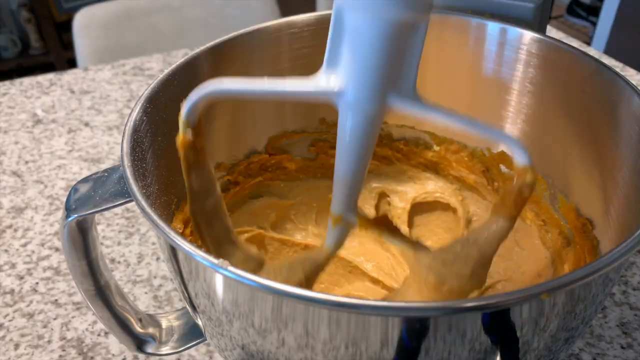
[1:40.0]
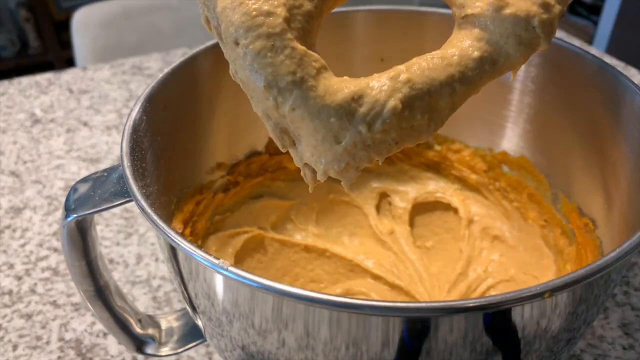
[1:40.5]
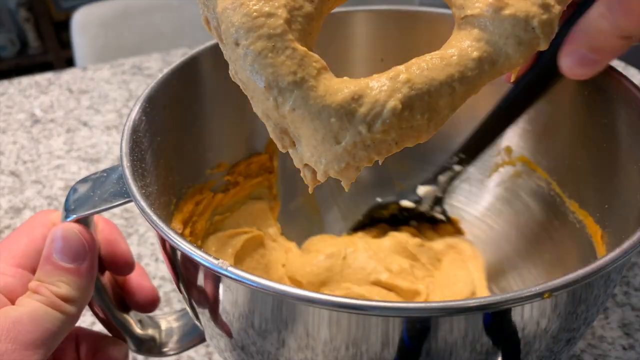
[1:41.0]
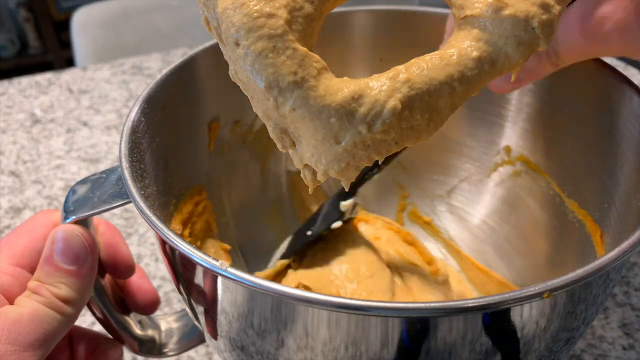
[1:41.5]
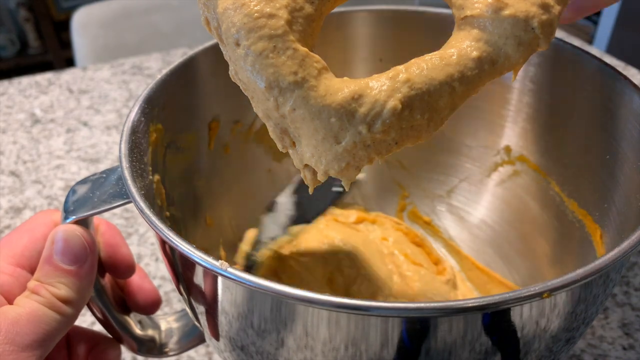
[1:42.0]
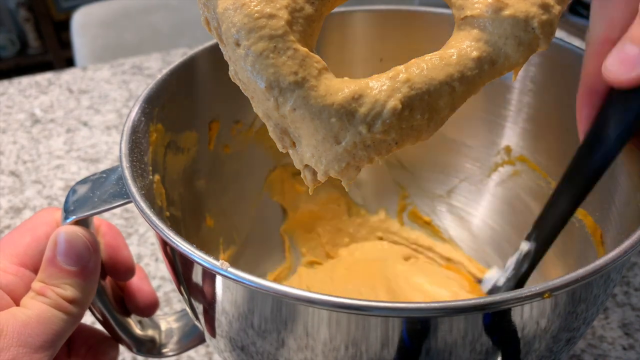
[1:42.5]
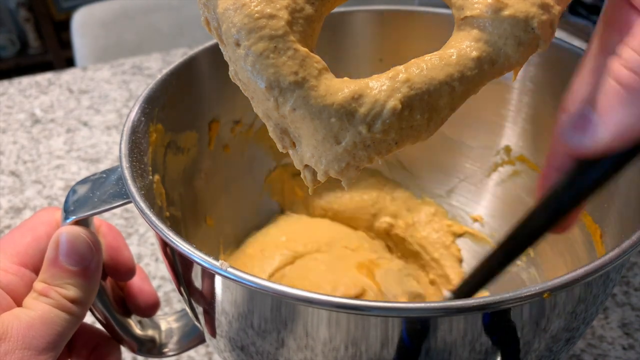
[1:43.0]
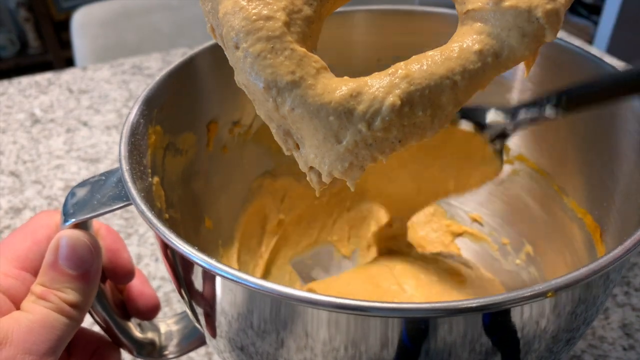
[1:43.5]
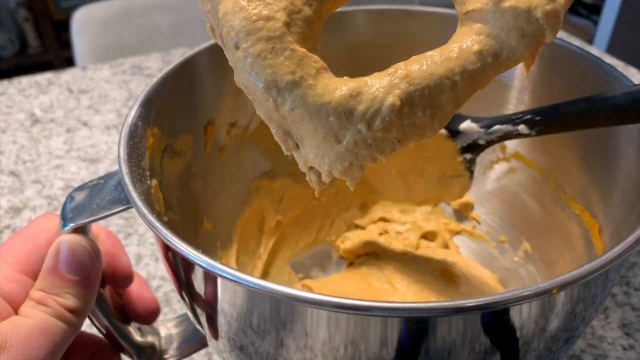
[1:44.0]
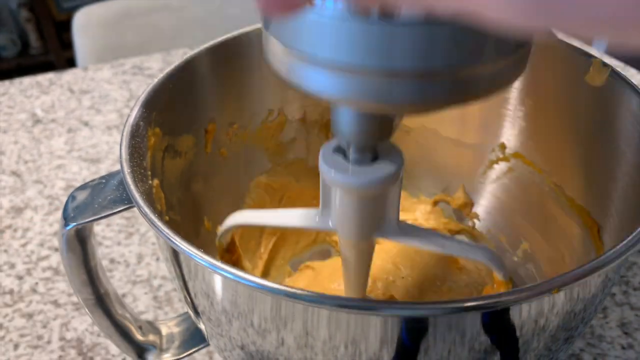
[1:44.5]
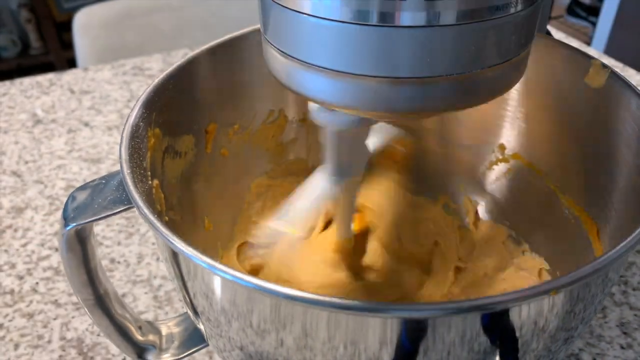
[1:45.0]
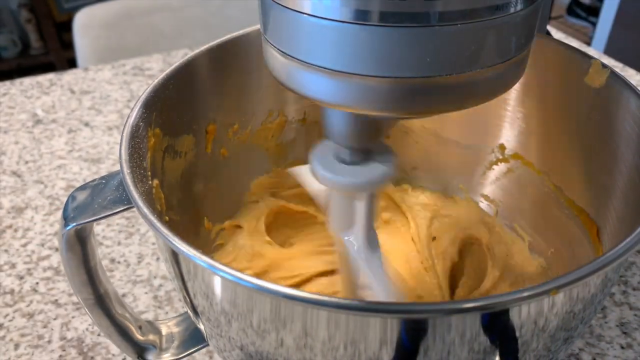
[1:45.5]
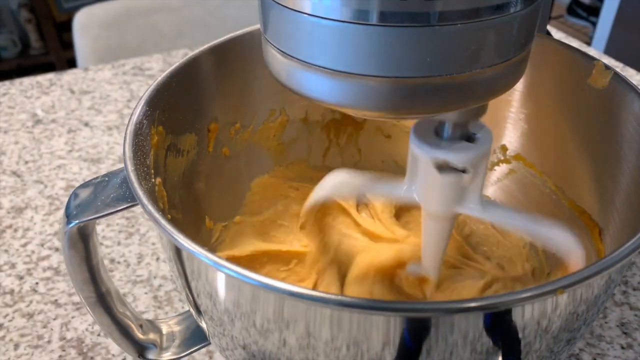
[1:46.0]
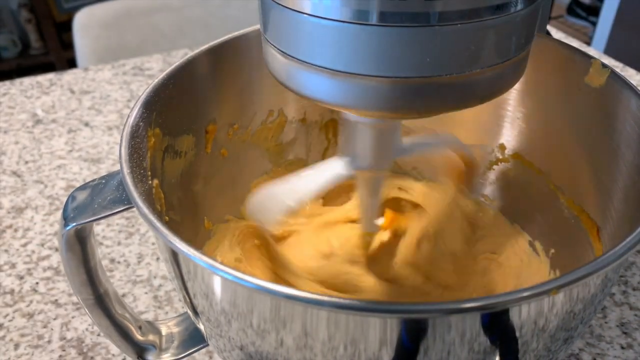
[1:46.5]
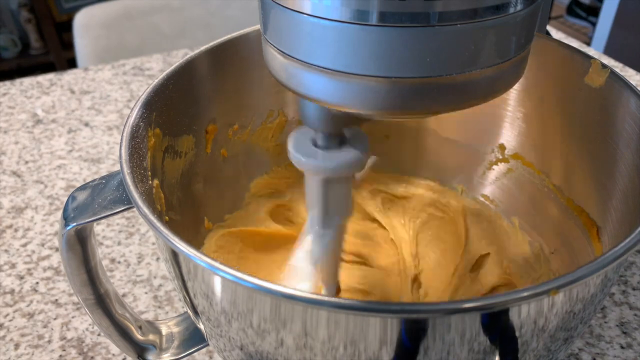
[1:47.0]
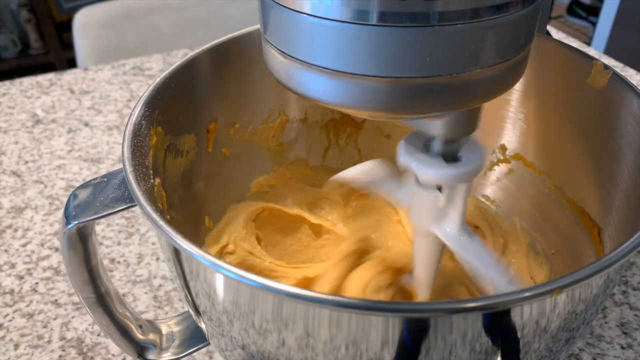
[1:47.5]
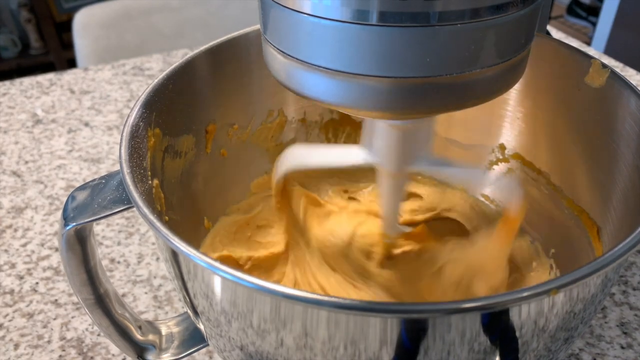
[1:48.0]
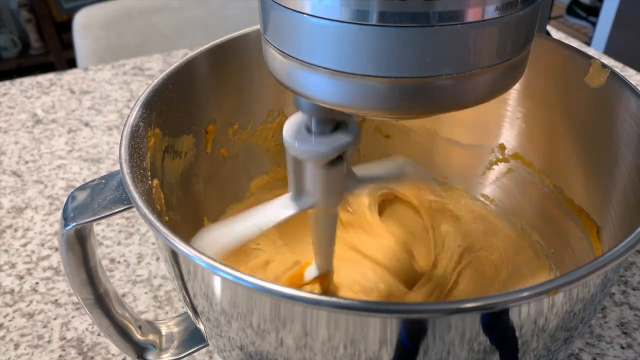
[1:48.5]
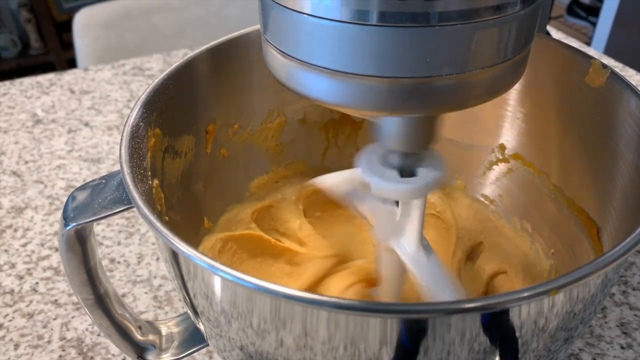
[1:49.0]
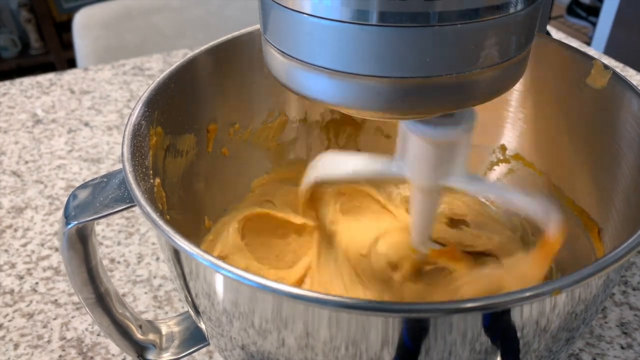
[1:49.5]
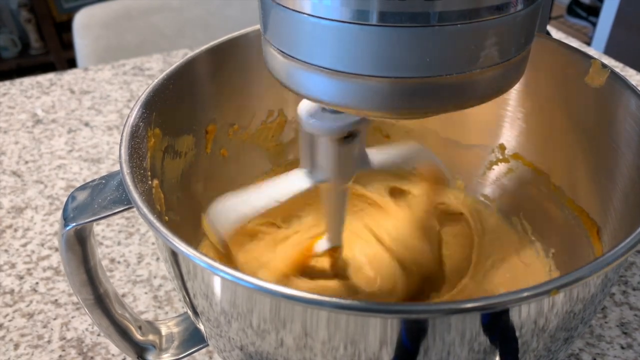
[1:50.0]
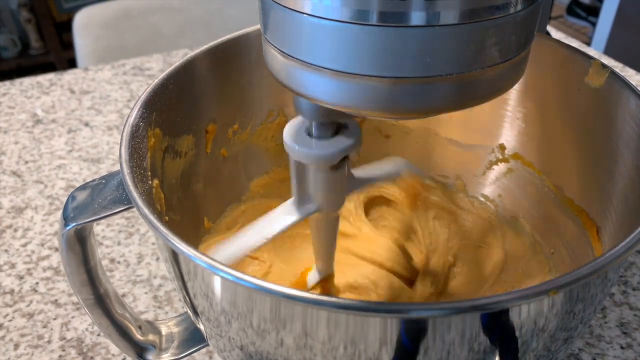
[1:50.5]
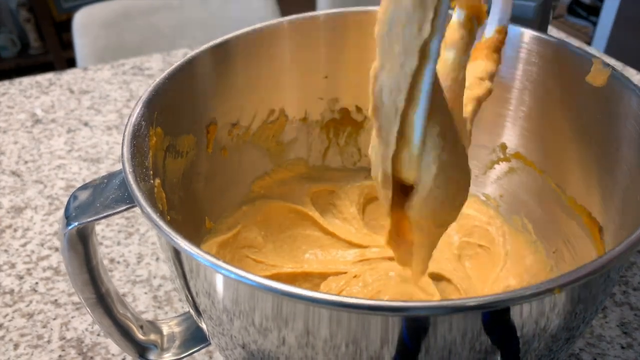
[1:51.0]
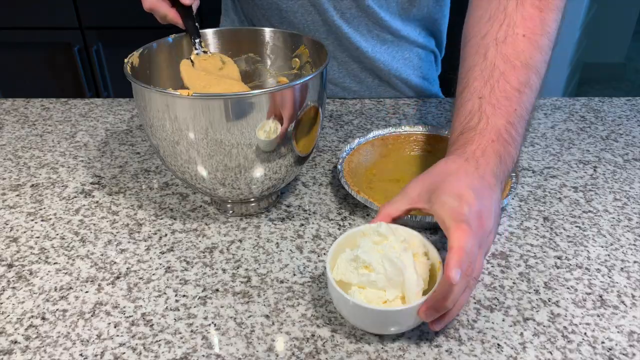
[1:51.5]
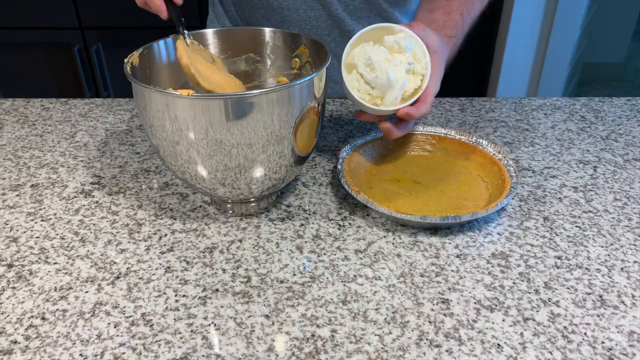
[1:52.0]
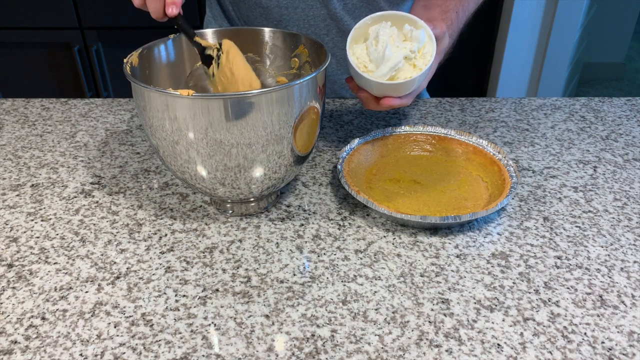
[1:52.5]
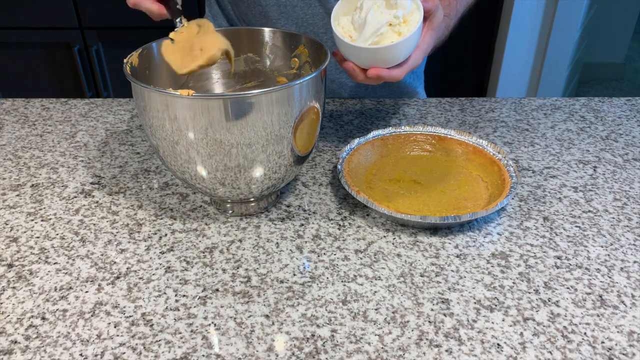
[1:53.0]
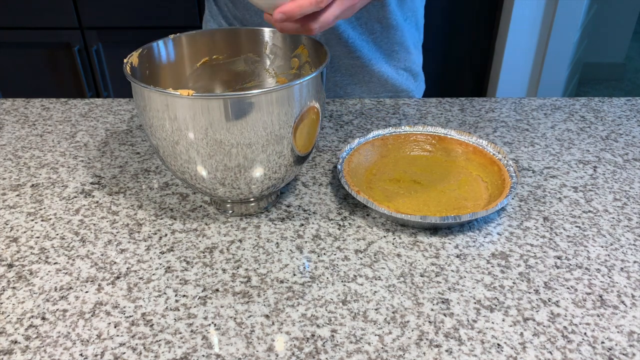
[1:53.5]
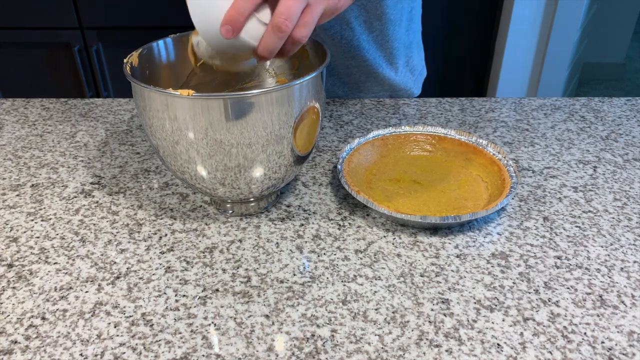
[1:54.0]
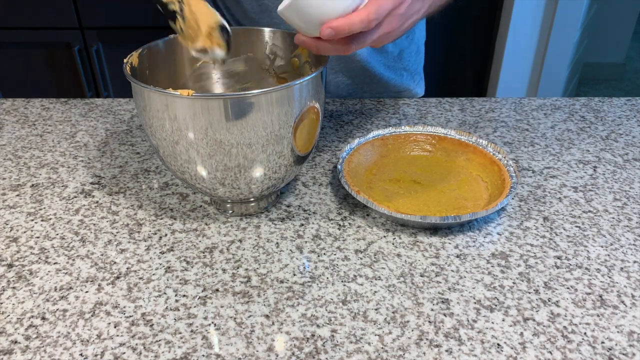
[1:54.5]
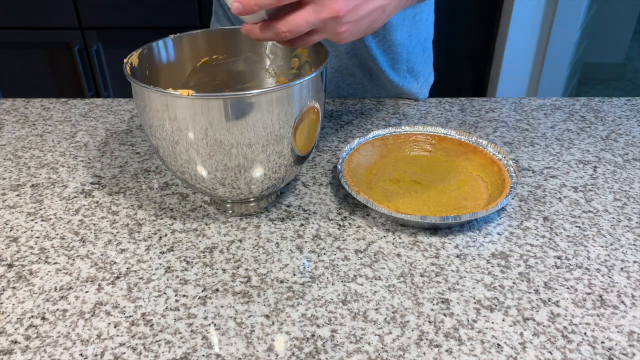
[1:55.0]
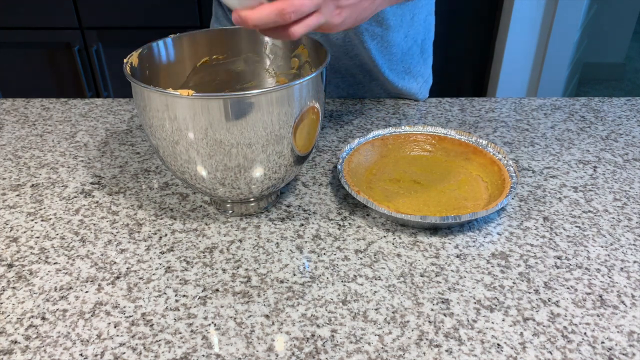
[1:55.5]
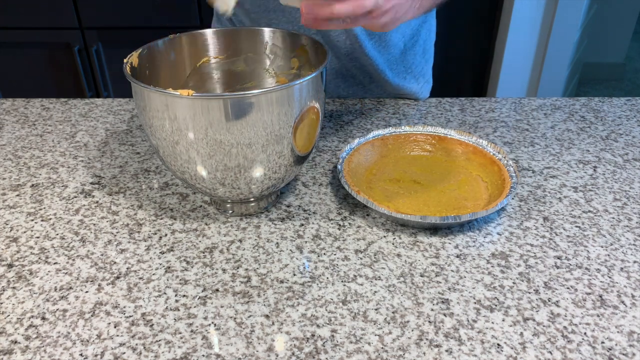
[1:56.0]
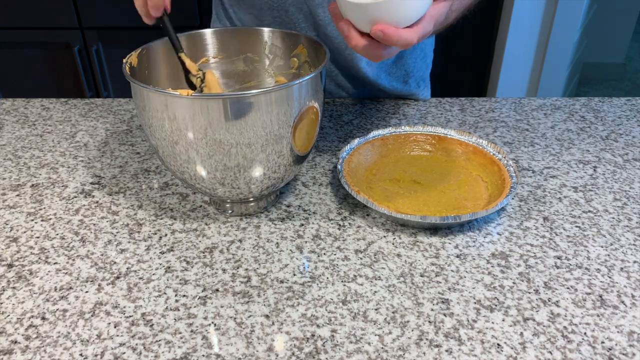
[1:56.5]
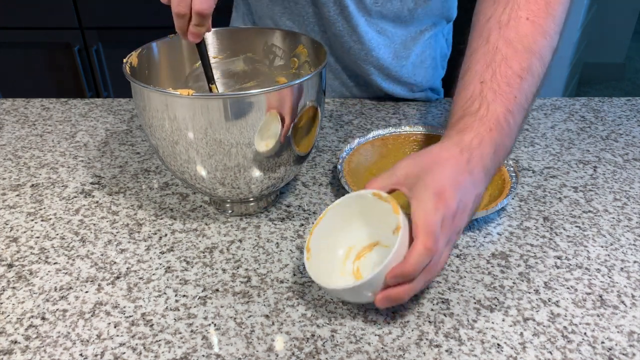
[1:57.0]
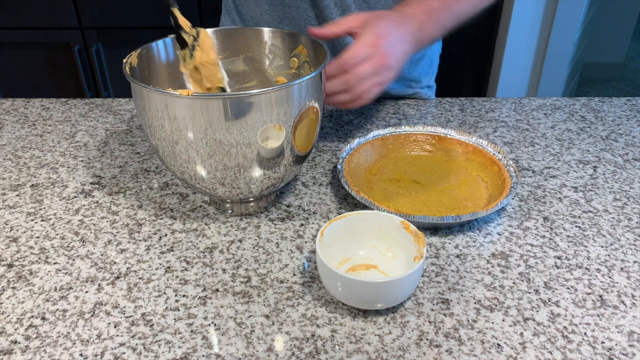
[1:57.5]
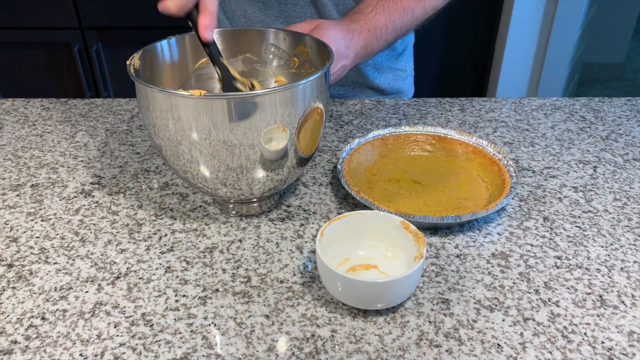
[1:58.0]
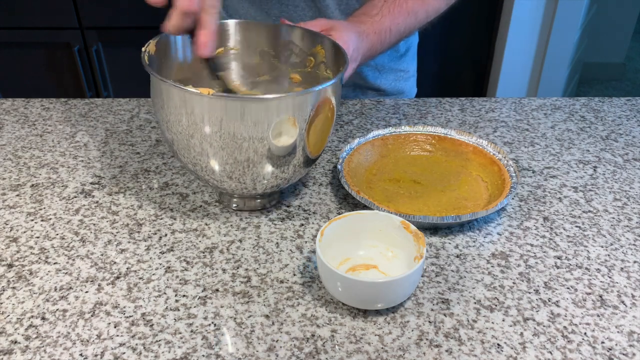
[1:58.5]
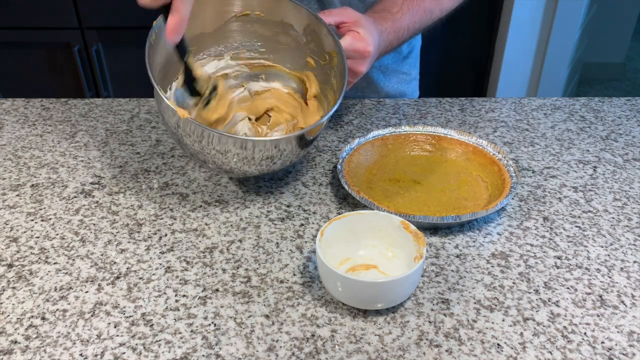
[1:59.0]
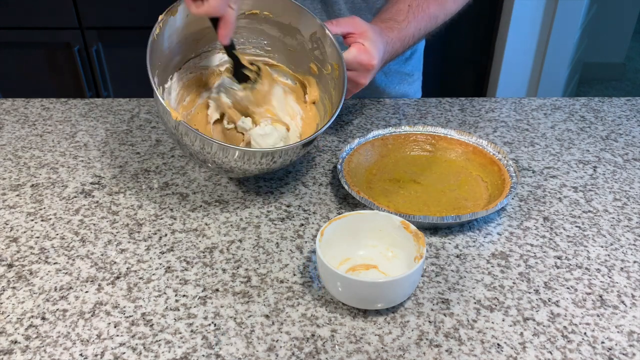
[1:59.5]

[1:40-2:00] The view zooms in on the big silver bowl on the countertop, where the machine mixer is mixing all the poured-in ingredients. When it finishes, the man takes a black spatula and mixes by hand, then the machine continues mixing until the mixture is creamy. He scoops a white substance, pours it into the mixture and mixes it with the spatula. He shows the inside of the bowl with all the ingredients as he mixes. The view stops zooming on the mixing machine and the countertop is visible.